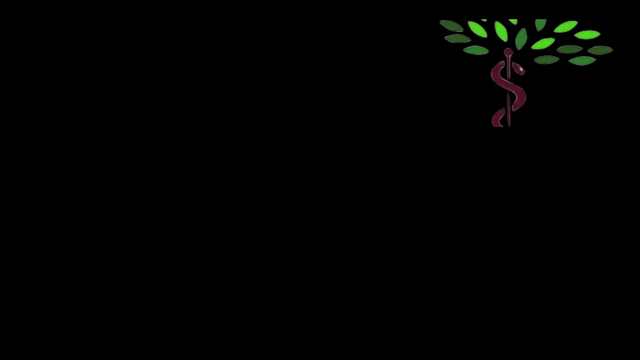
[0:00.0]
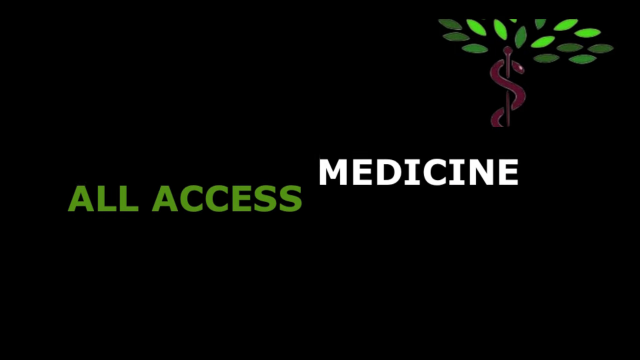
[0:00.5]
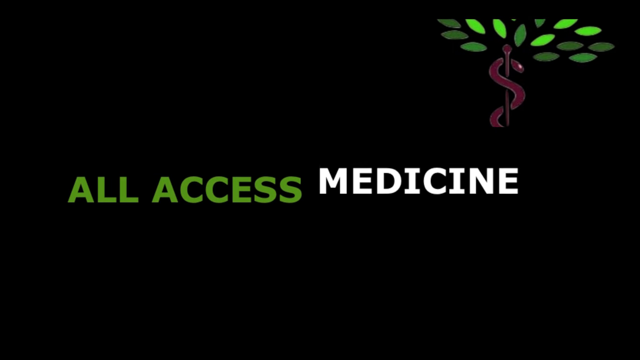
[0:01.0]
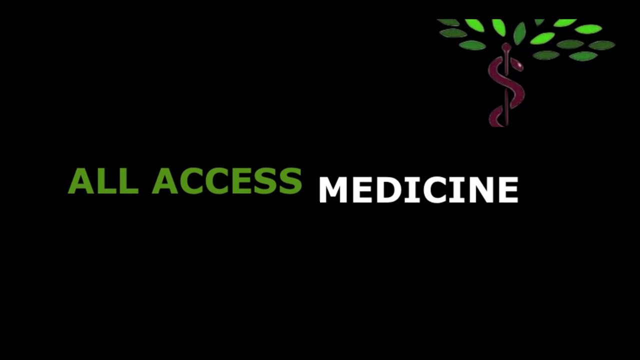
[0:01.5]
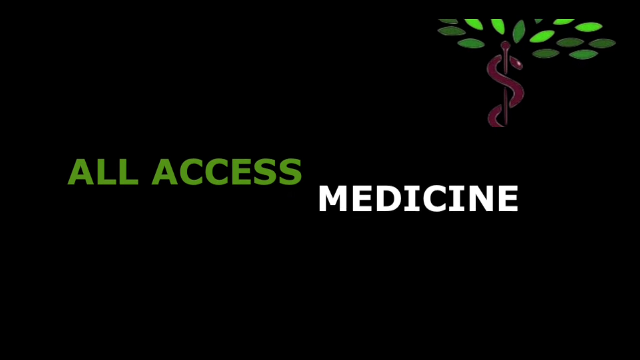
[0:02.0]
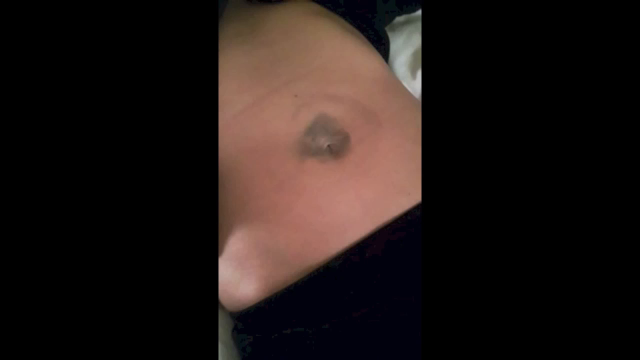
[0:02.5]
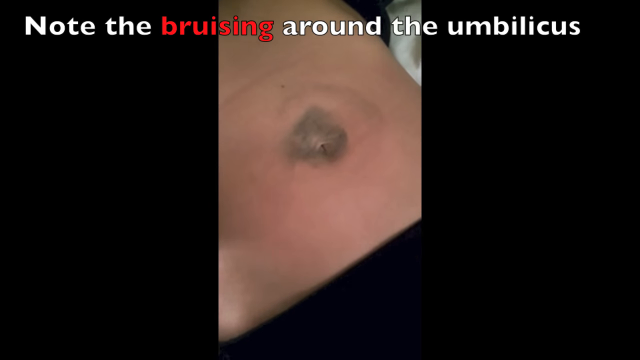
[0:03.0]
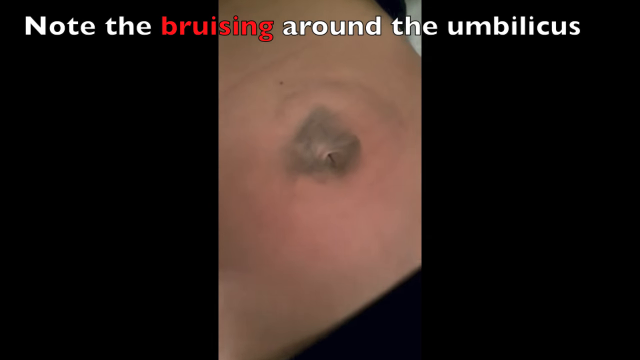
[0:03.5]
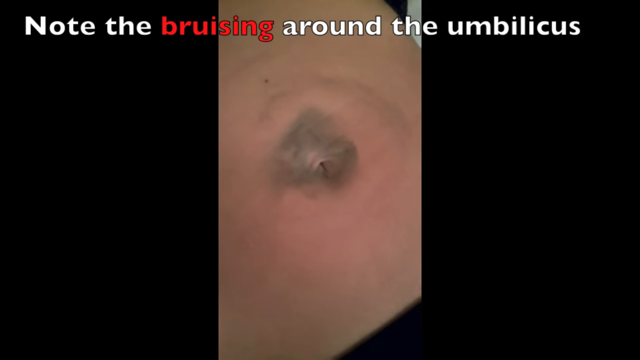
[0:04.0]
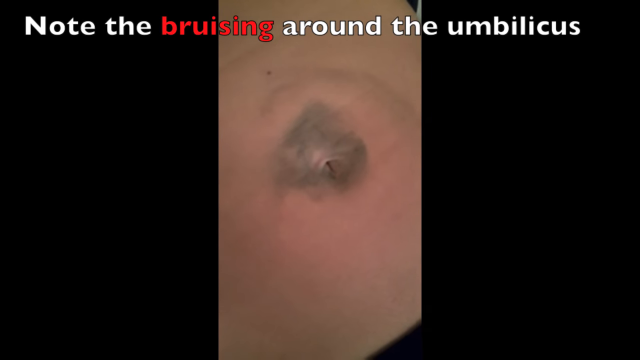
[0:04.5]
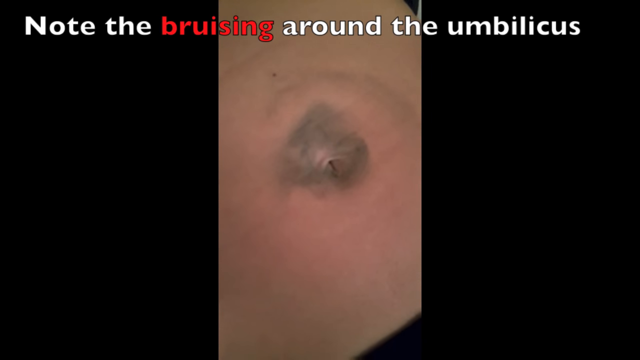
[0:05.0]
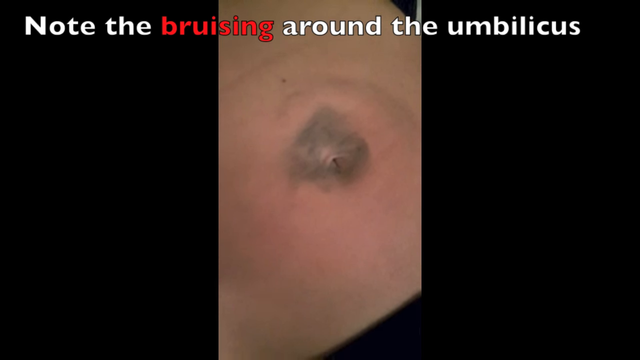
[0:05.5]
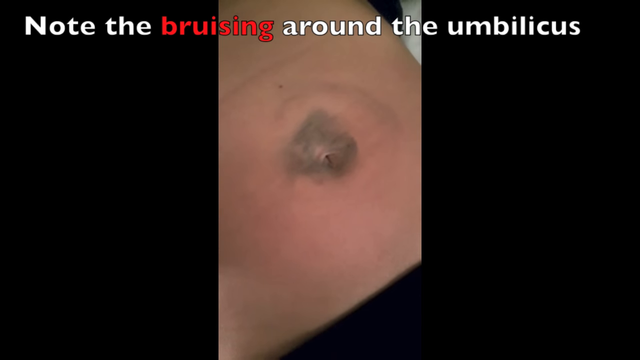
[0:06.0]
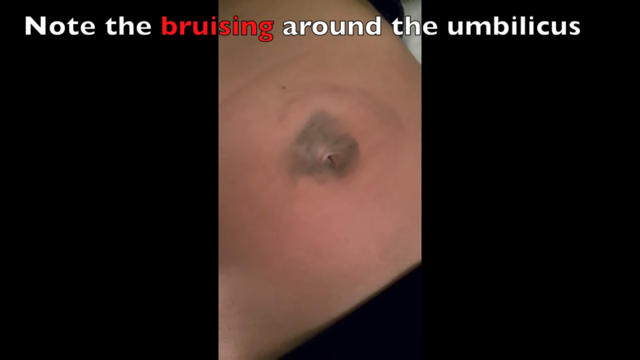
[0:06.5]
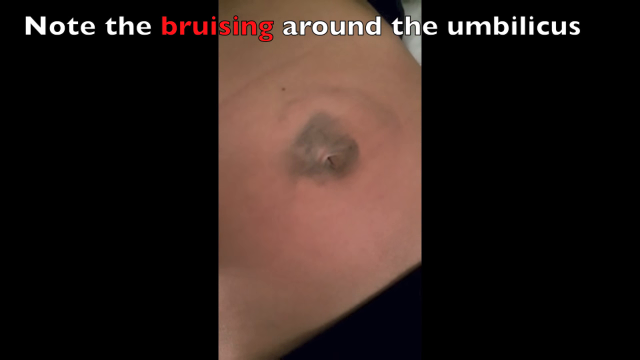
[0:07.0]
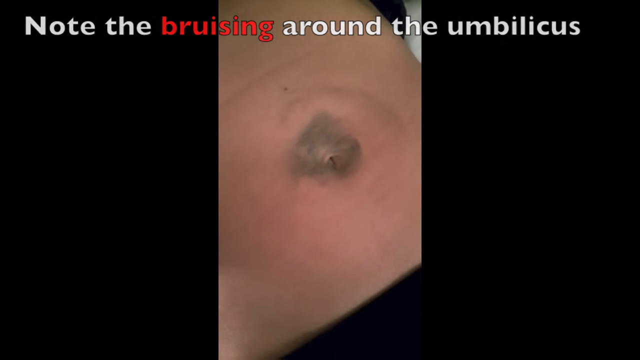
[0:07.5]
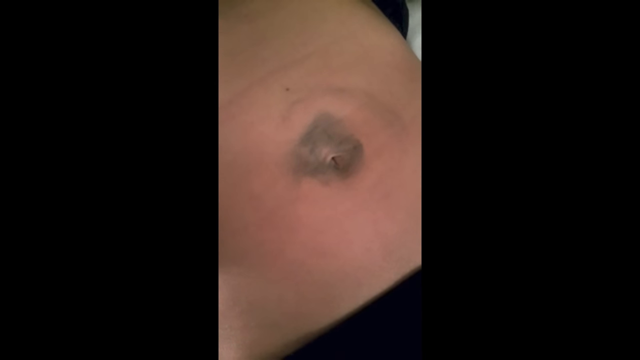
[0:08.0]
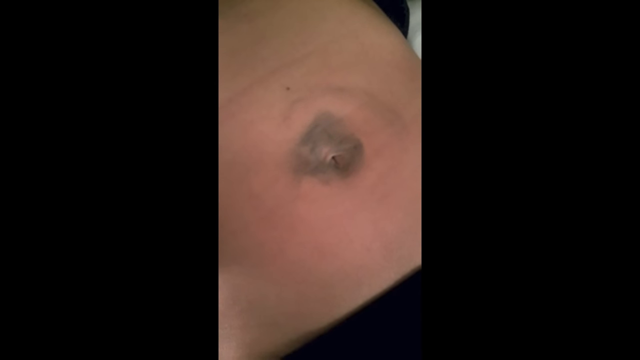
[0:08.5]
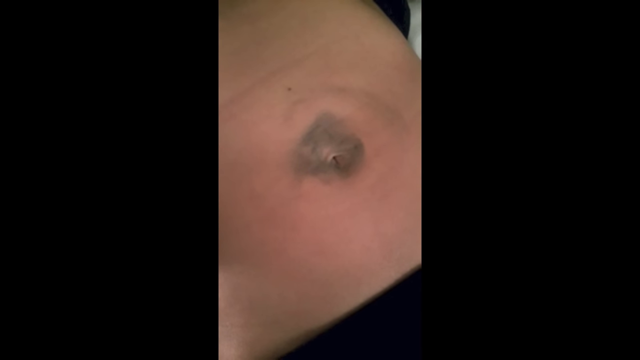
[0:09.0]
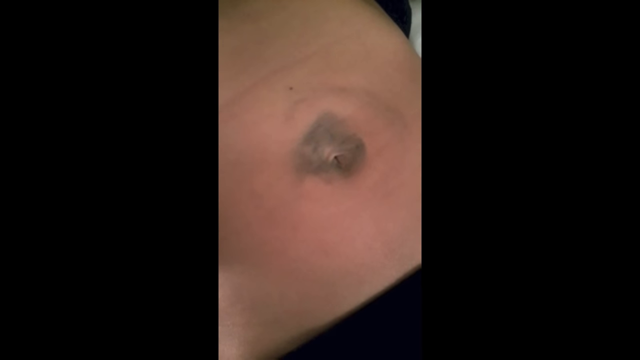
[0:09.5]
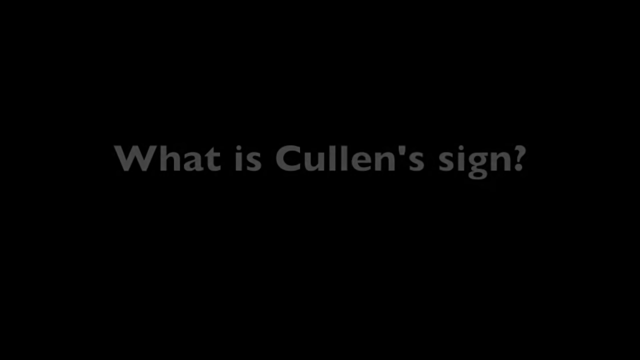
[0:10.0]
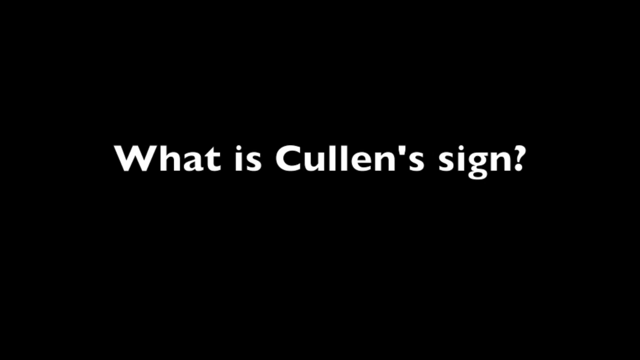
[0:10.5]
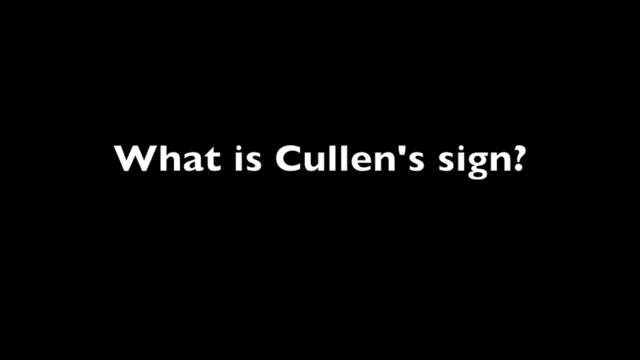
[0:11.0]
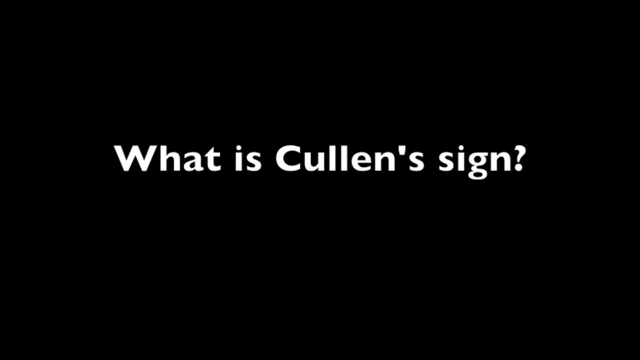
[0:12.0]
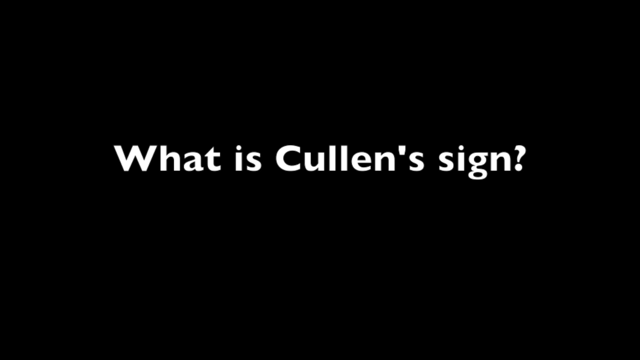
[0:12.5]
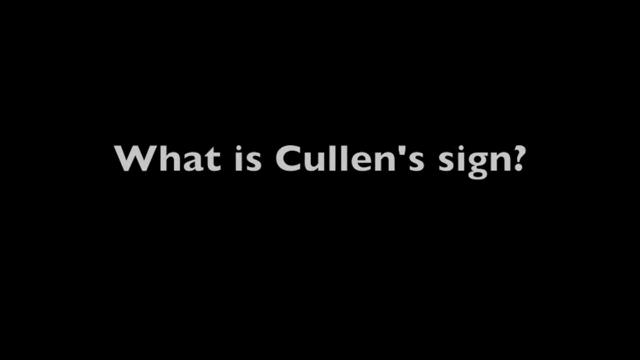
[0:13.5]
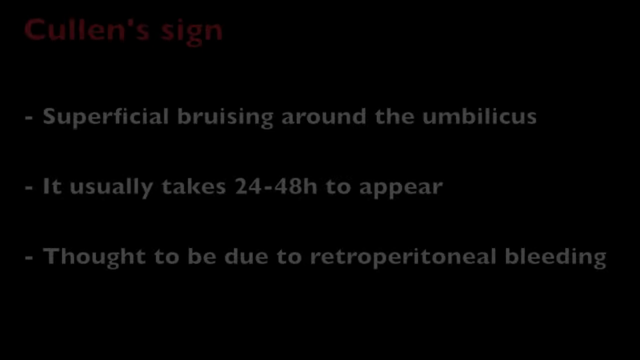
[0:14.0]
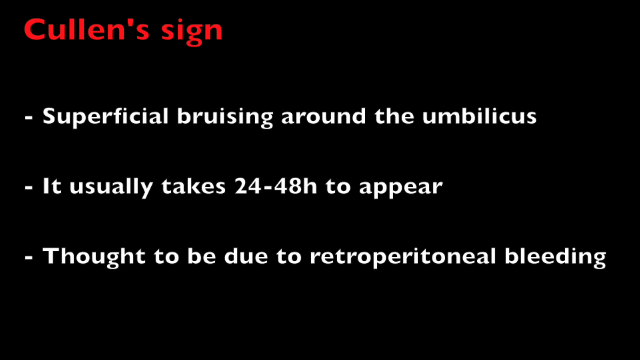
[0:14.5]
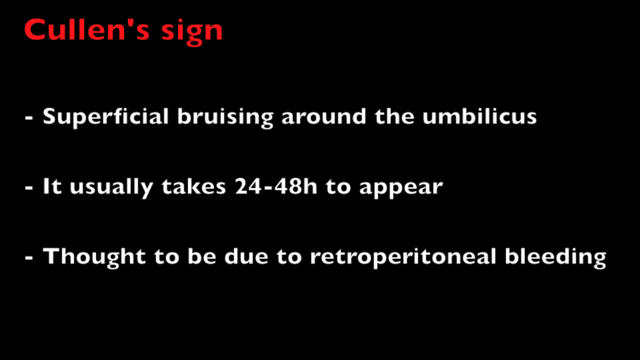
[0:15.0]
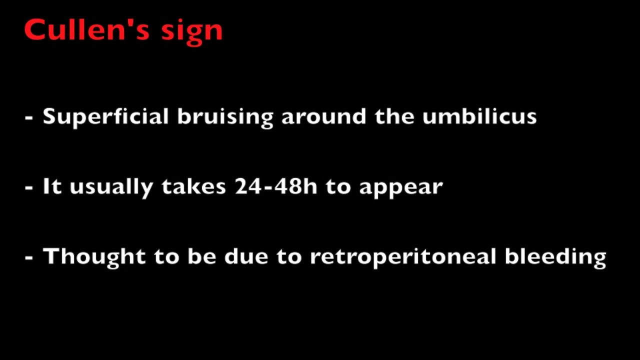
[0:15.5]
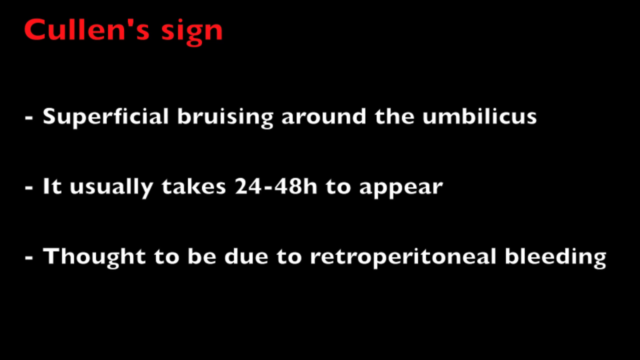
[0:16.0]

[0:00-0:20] A quick title card reads "all access medicine," with "all access" in green and "medicine" in white, and what looks like a tree logo in the top right. Next comes what looks like a wound, seemingly someone's belly button, with a large, round bruise around the belly button area. Text at the top reads "note the bruising around the umbilicus" in white, except for "bruising," which is in red. The video cuts to a black screen with white text reading "what is Cullen's sign?" Then a slide that looks like a PowerPoint slide with a black background appears, with "Cullen's sign" at the top left and three white bullet points, each with a dash next to it. The first reads "superficial bruising around the umbilicus."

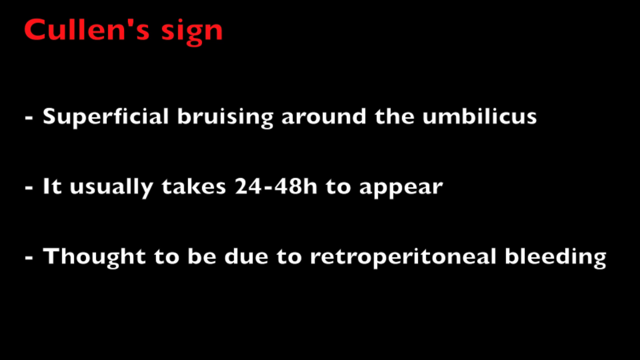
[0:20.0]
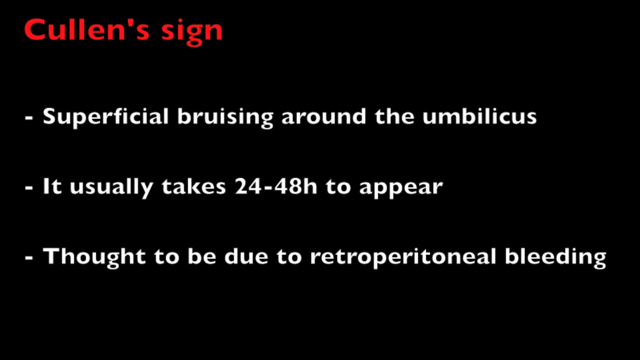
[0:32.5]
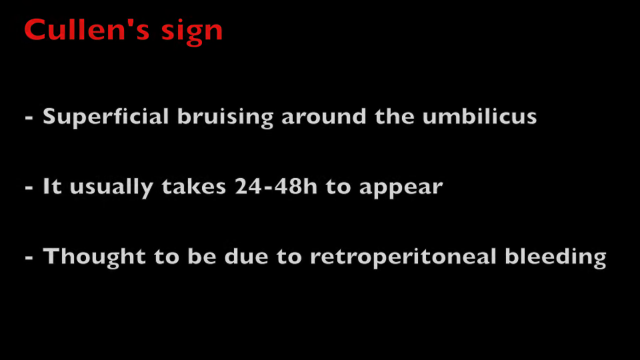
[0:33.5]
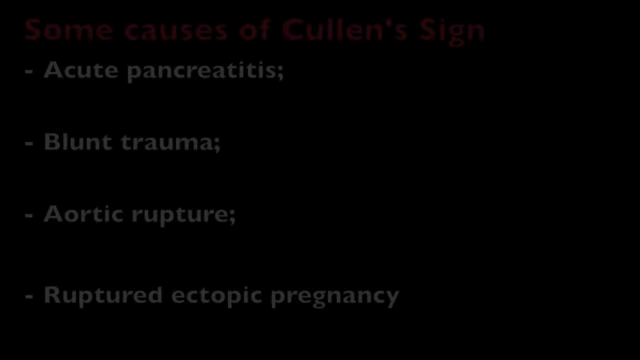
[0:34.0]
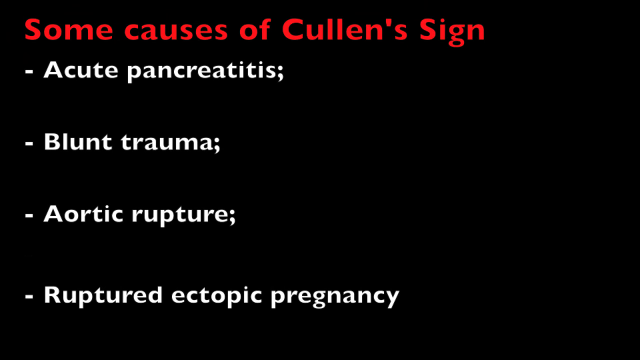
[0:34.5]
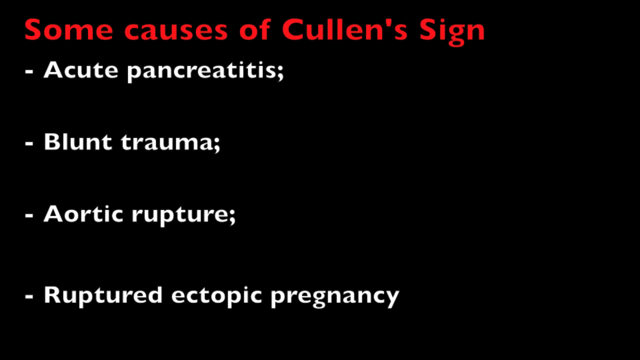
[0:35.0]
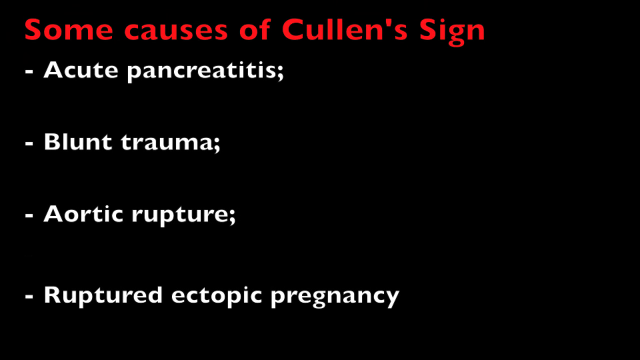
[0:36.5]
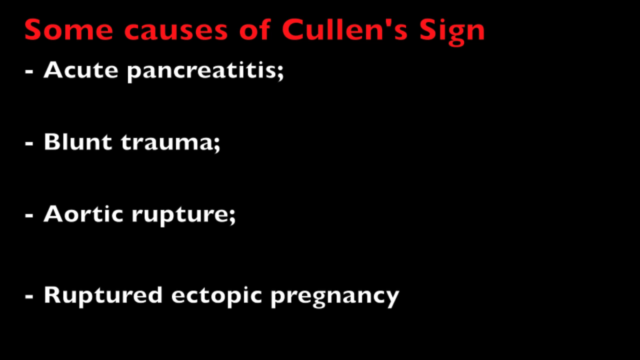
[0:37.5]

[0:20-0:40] The second bullet point reads "it usually takes 24-48H to appear," apparently meaning 24 to 48 hours, and the third reads "thought to be due to retroperitoneal bleeding," also in white text. Another screen follows with the same black background and white text, with a heading in red text at the top right reading "some causes of Cullen's sign." Below it are four white bullet points, each with a dash next to it: "acute pancreatitis," "blunt trauma," "aortic rupture," and "ruptured ectopic pregnancy." The first three bullet points end with semicolons.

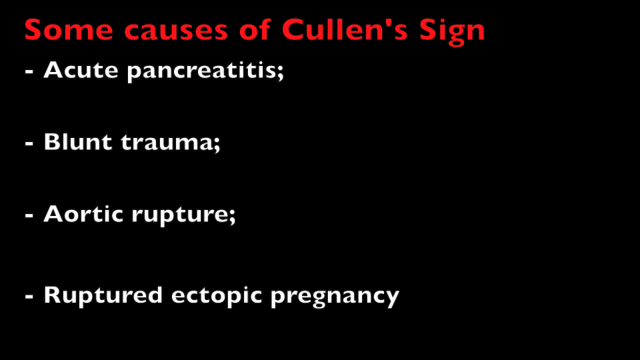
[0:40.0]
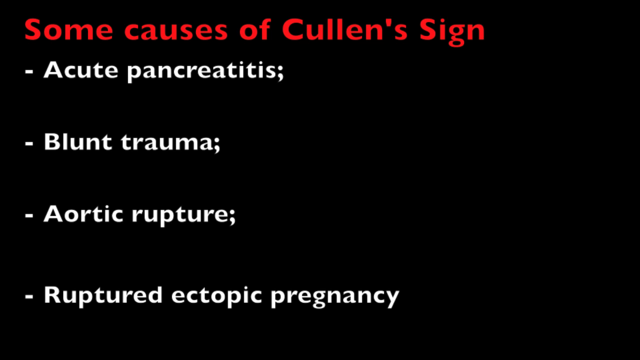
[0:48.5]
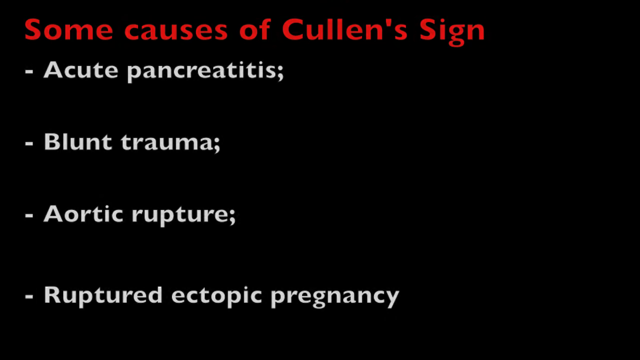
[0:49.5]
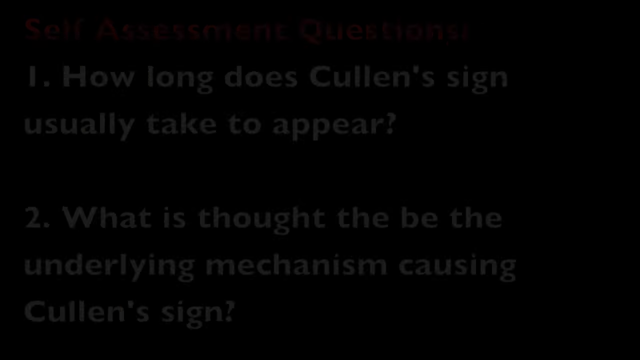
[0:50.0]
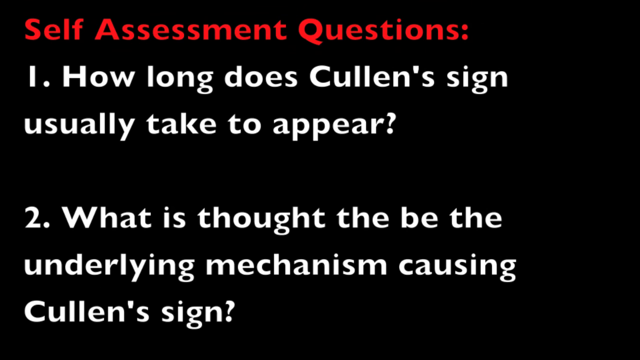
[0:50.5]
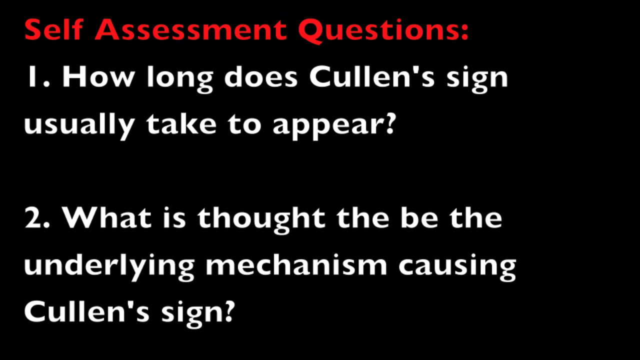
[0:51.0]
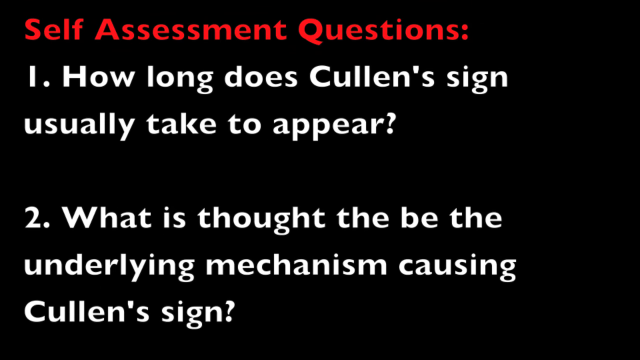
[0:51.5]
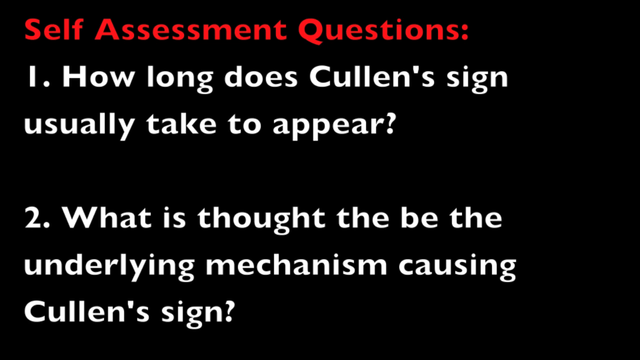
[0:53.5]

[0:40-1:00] In the heading "Some causes of Cullen's sign," the S in "Some" and the C in "Cullen's" are capitalized, and the bullet points begin with capitalized words: "Acute," "Blunt," "Aortic," and "Ruptured." The screen then transitions to another black card like a PowerPoint slide. A red sentence near the top reads "self-assessment questions," and below it are two numbered items, 1 and 2, in white text. The first reads "how long does Cullen's sign usually take to appear?" The second asks about "the underlying mechanism causing Cullen's sign" and seems to contain a typo near its beginning.